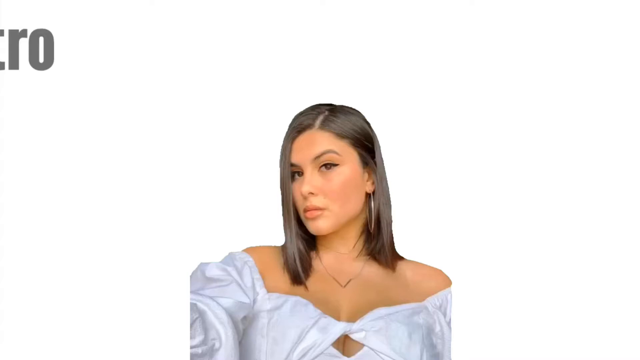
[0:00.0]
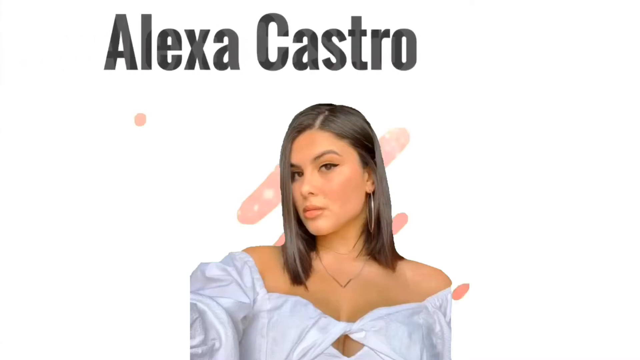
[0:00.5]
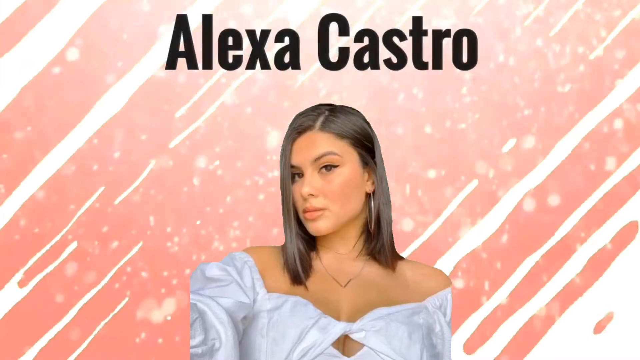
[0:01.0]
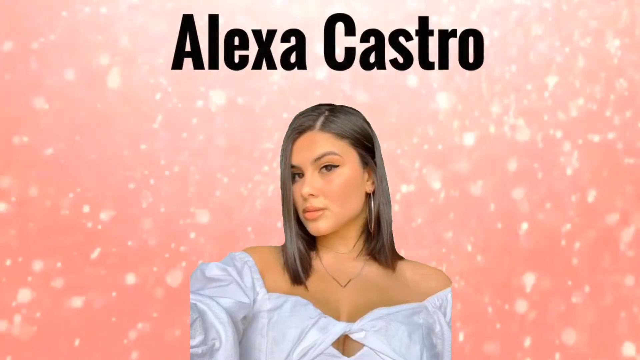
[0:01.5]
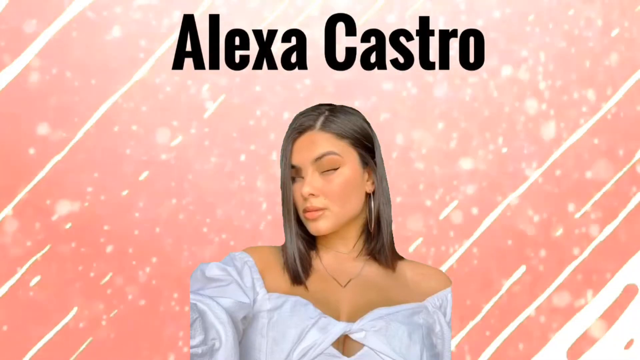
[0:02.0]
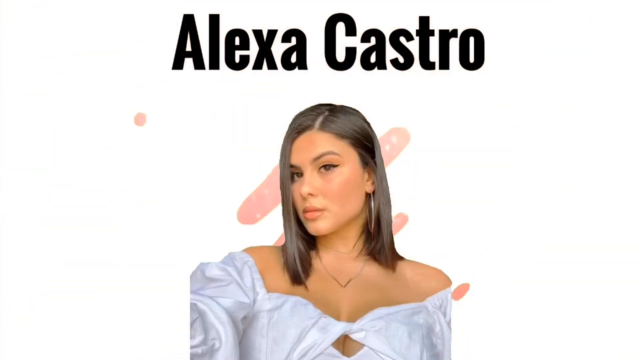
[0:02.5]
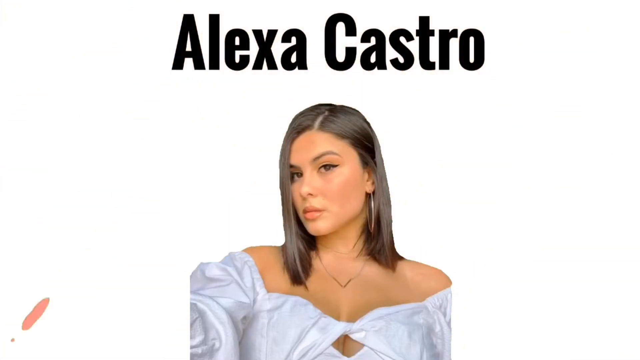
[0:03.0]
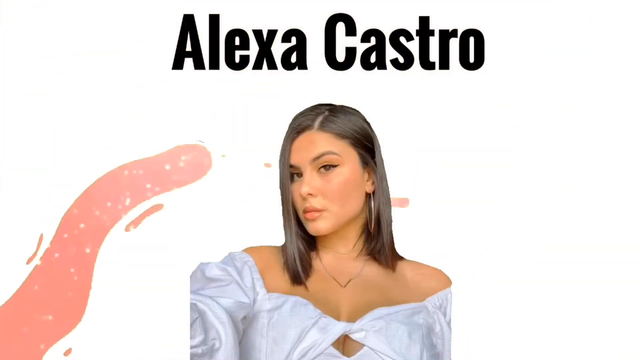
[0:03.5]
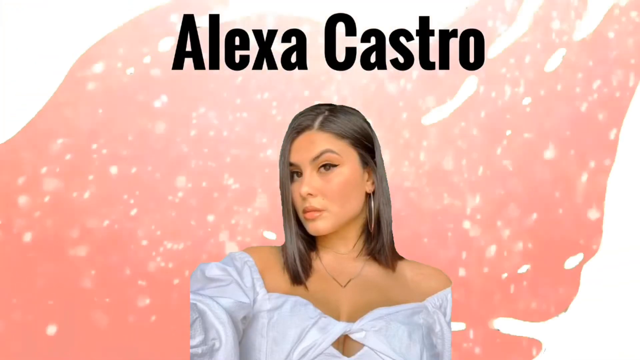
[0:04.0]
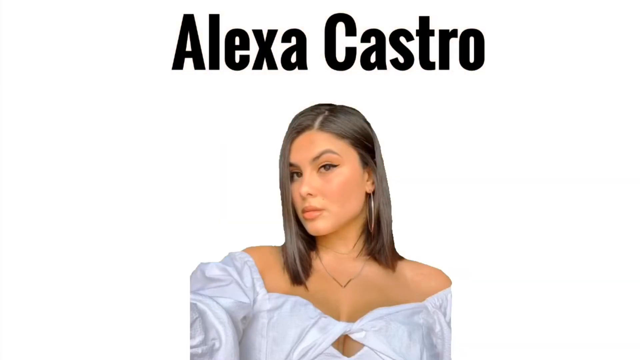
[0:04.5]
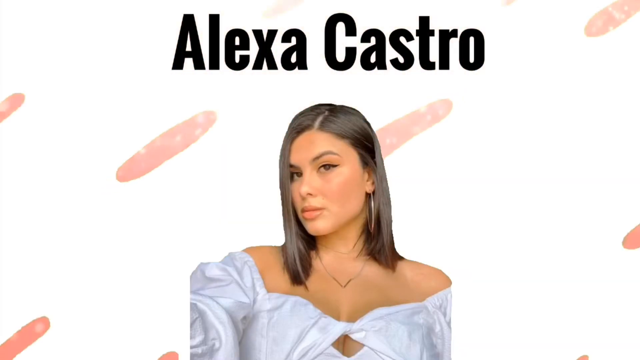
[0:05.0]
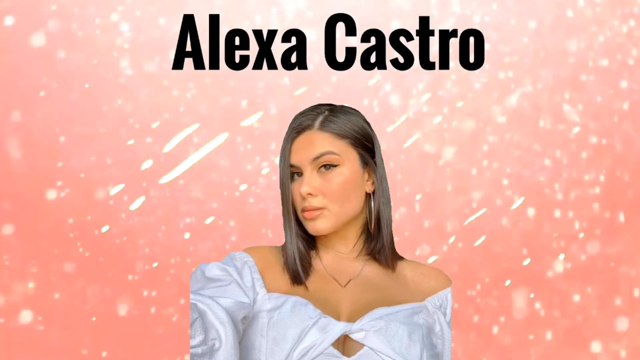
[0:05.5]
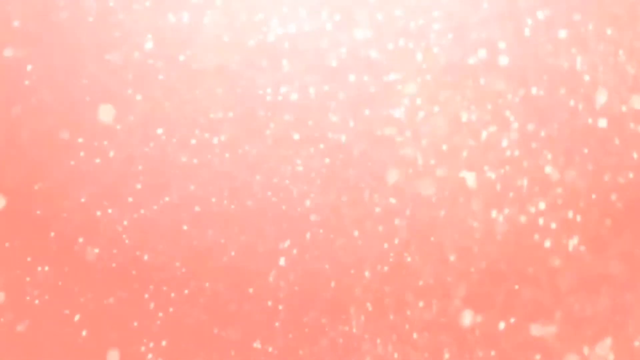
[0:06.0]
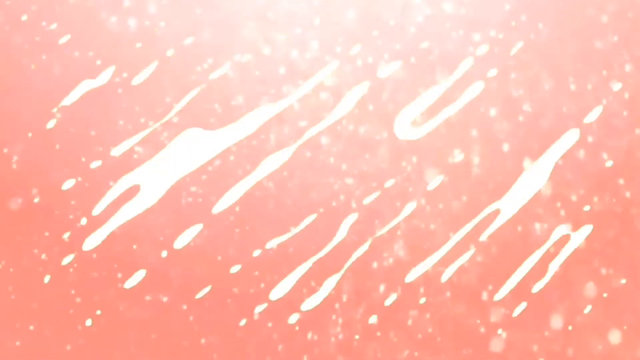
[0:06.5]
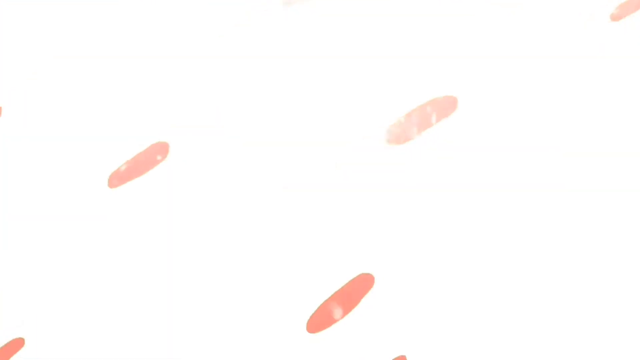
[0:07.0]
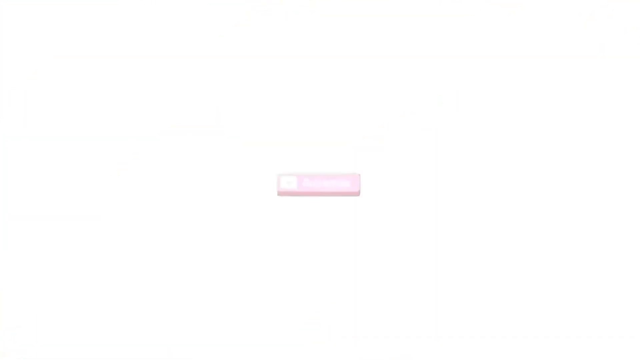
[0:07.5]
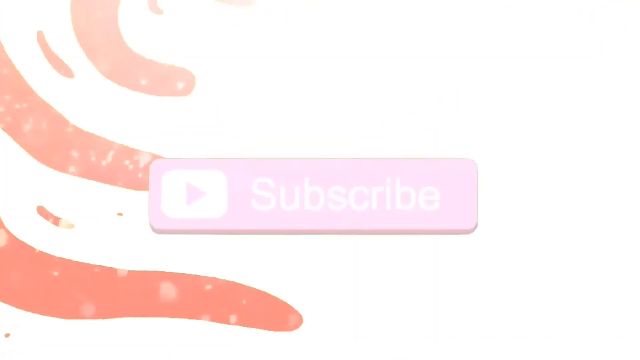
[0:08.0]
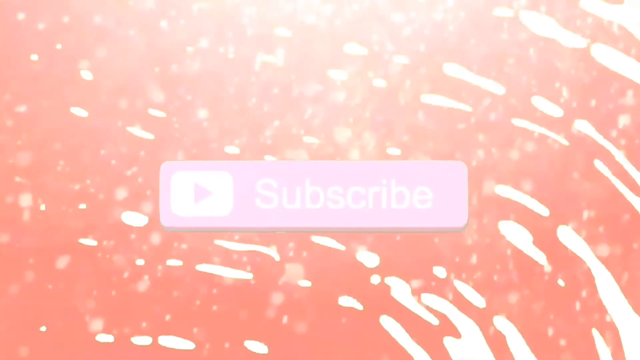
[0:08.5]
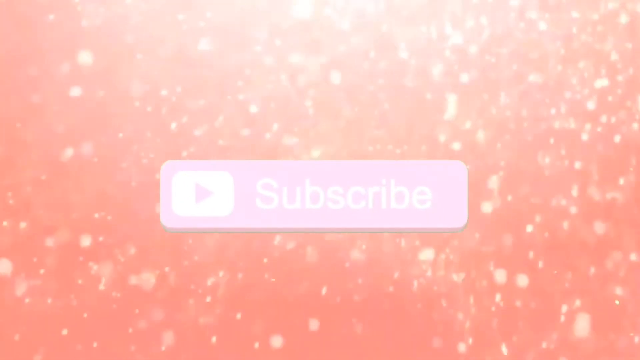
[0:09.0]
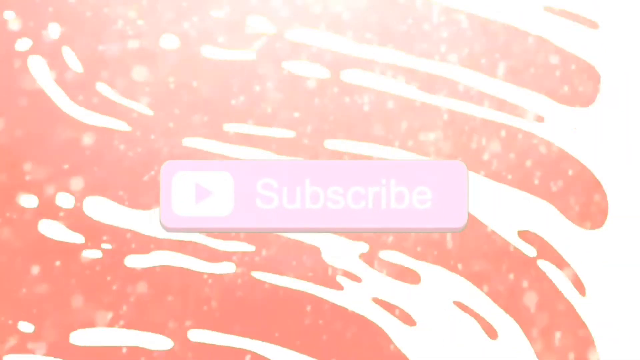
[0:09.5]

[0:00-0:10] The video opens with a close-up of a woman in the very center of the frame, toward the bottom, showing her head and shoulders. She has shoulder-length, straight, very glossy brown hair. She wears large gold hoop earrings, a delicate gold necklace that forms a V shape, and a white off-the-shoulder top that looks knotted in the middle. She has black winged eyeliner and coral lipstick, and she is white. Next comes a close-up of a woman in the very center of the frame, sitting or standing in front of the camera and looking directly at it, with a solid white background behind her. The name "Alexa Castro" slides onto the white background from the left side of the frame and comes to rest in the middle, written in a simple black font. At the same time, diagonal lines appear across the background; they look hand-drawn and rough, filled with a peach color with gold lights or confetti sparkling in it. This quickly transitions to fill the background, so only the peach and gold sparkles are visible behind her, before it transitions back into the lines and then disappears completely. This loops a couple of times behind her before everything vanishes, leaving a blank white screen. A subscribe logo then appears in the middle of the screen, with the word "subscribe" written in white on a pink rectangular box, and the peach and gold confetti effect appears in the background once again.